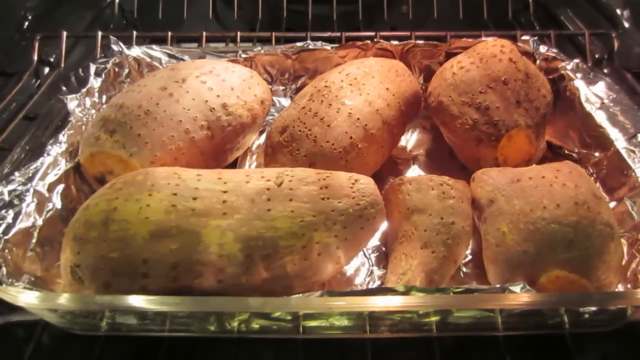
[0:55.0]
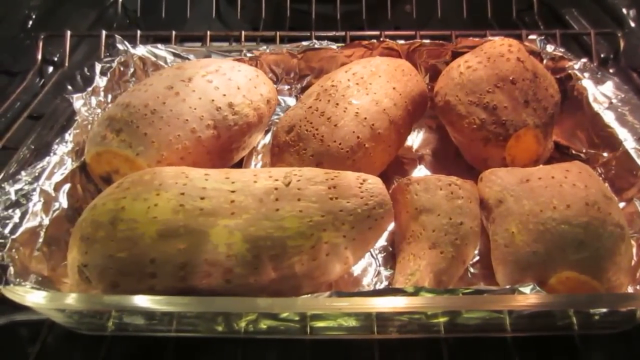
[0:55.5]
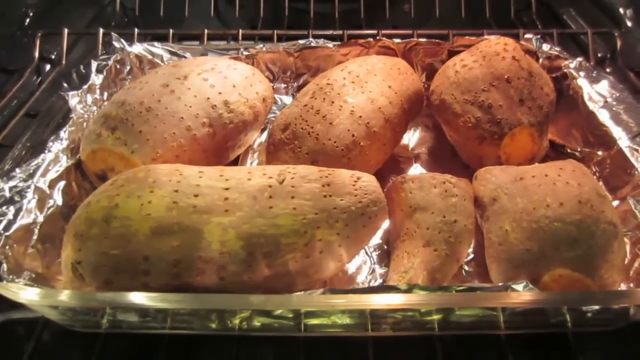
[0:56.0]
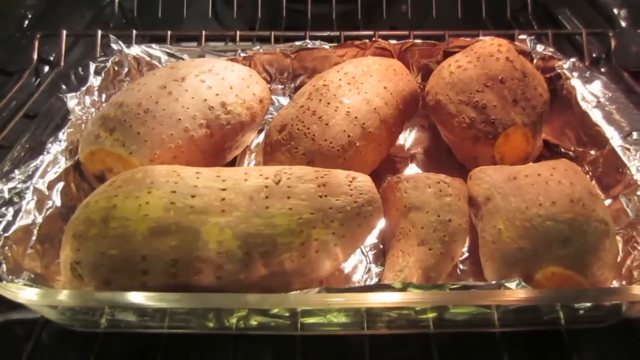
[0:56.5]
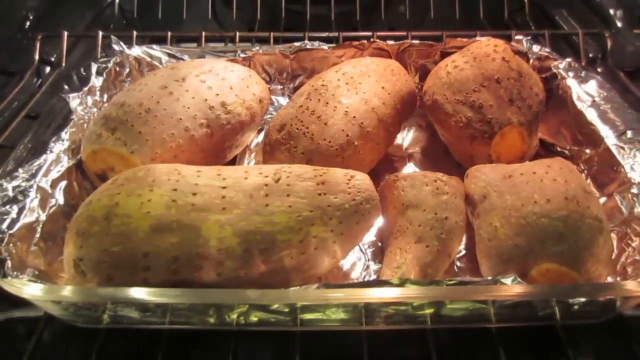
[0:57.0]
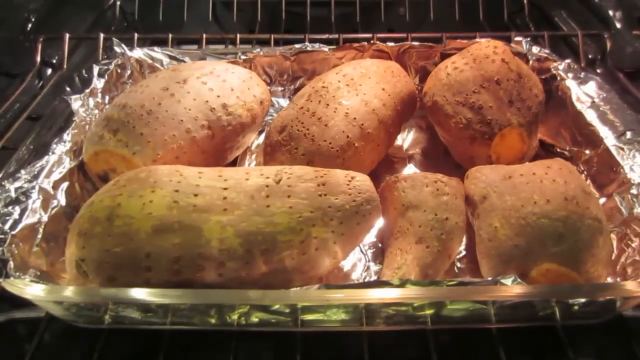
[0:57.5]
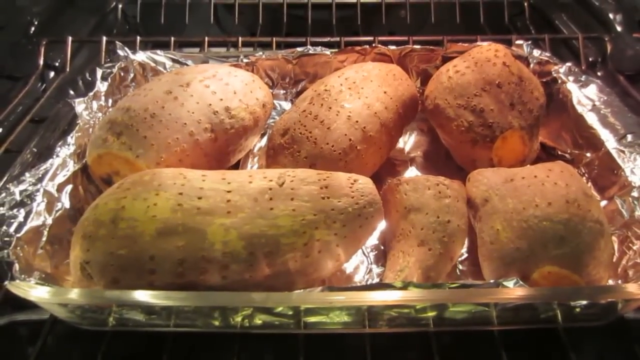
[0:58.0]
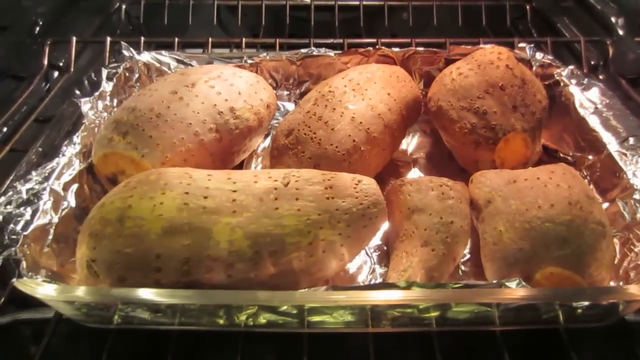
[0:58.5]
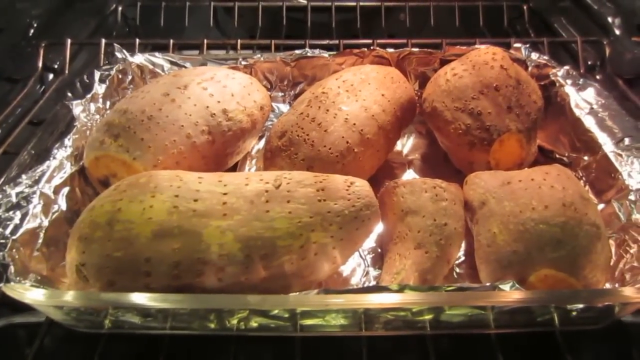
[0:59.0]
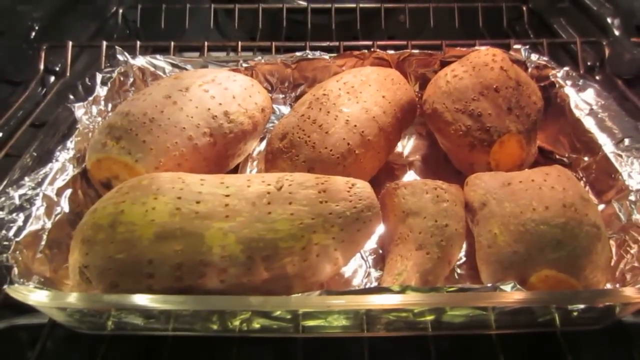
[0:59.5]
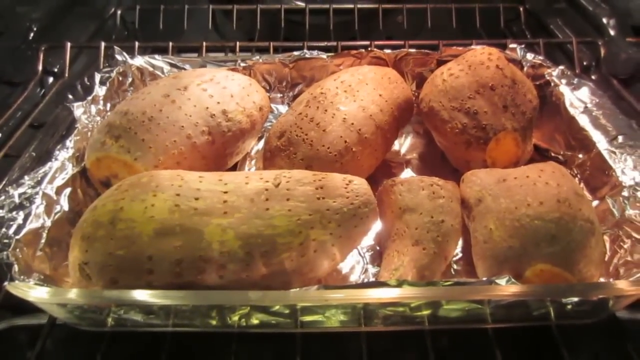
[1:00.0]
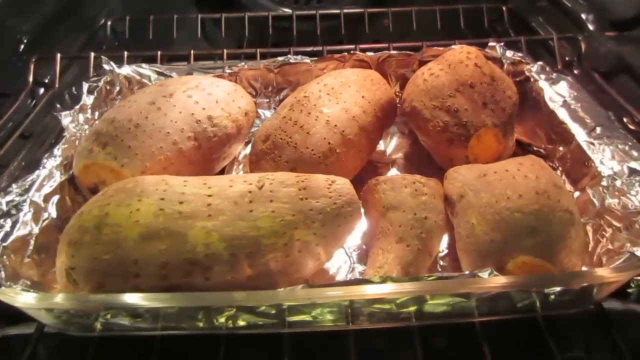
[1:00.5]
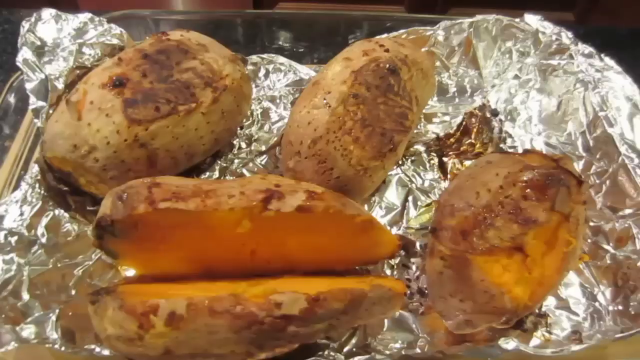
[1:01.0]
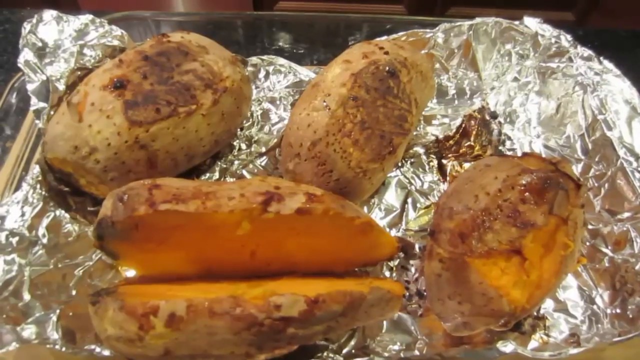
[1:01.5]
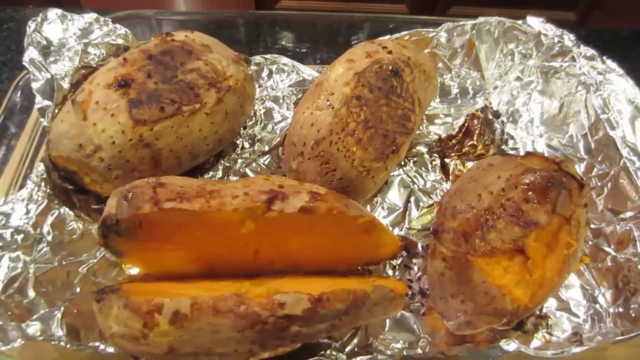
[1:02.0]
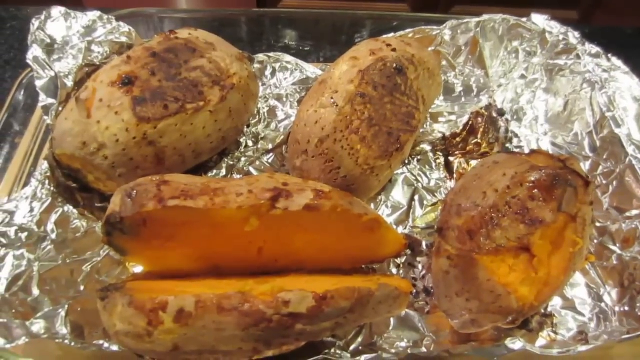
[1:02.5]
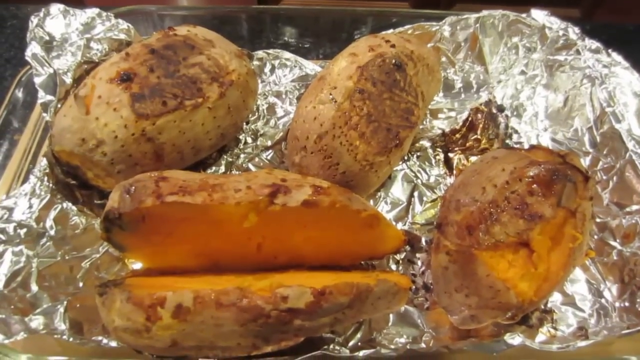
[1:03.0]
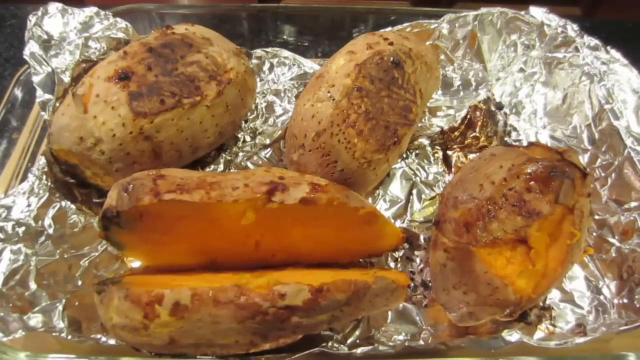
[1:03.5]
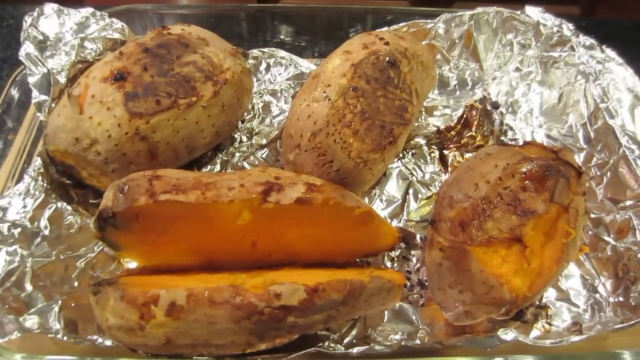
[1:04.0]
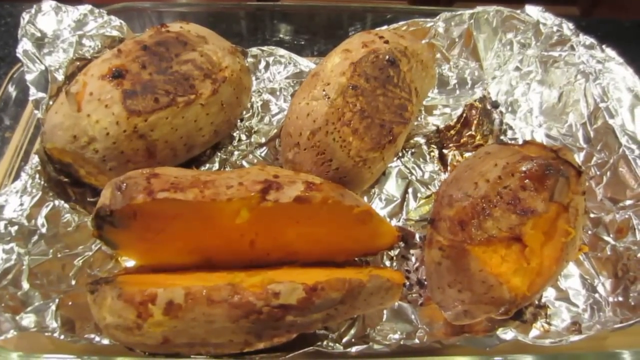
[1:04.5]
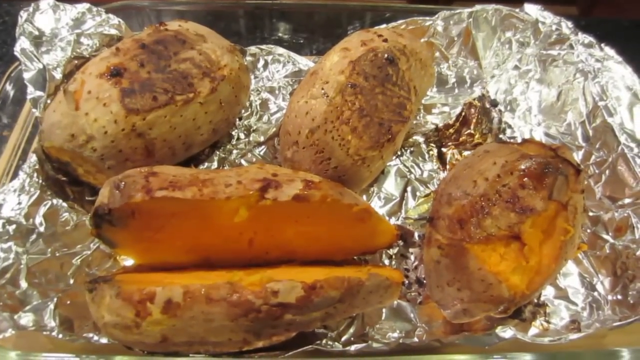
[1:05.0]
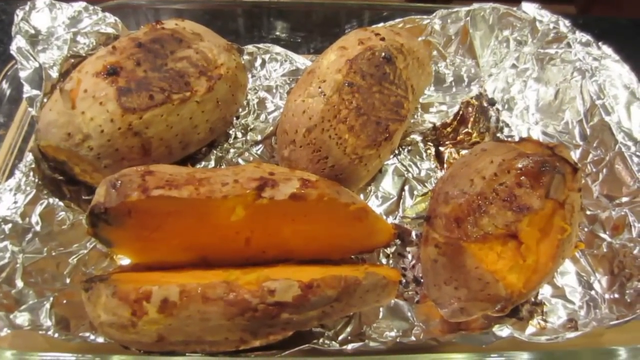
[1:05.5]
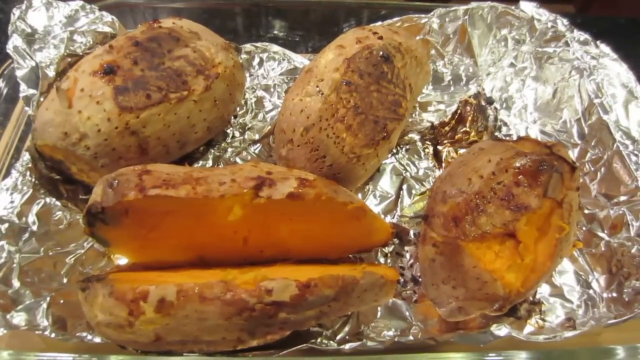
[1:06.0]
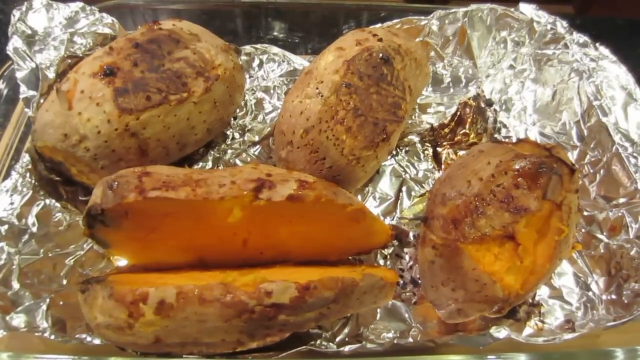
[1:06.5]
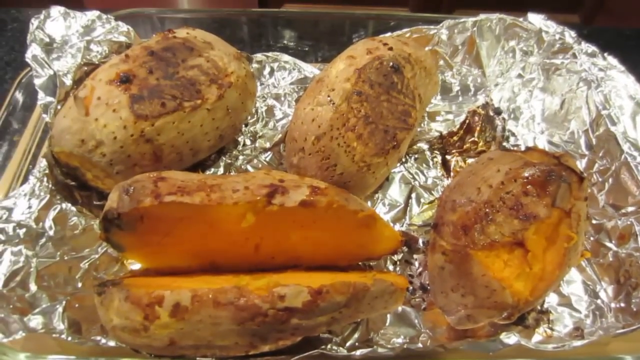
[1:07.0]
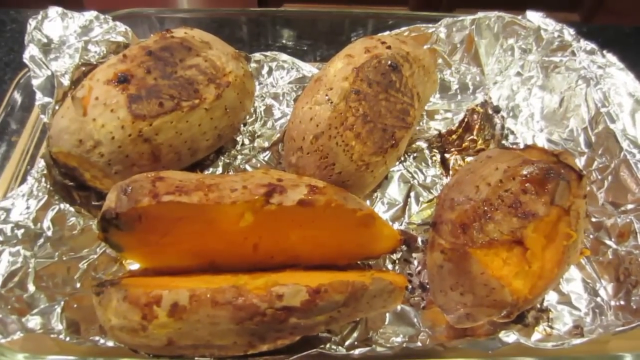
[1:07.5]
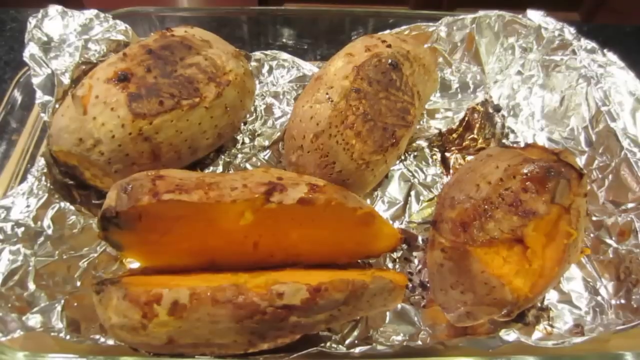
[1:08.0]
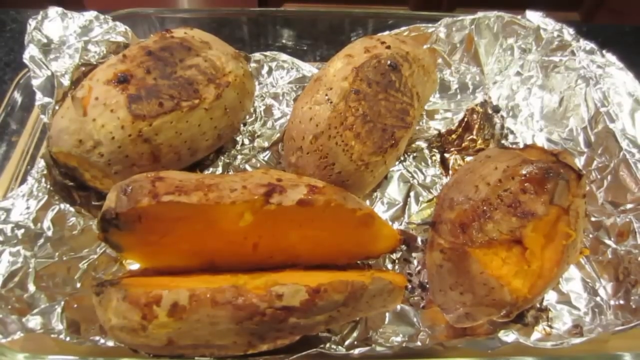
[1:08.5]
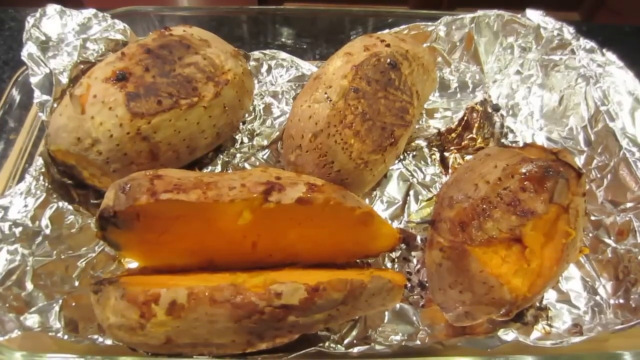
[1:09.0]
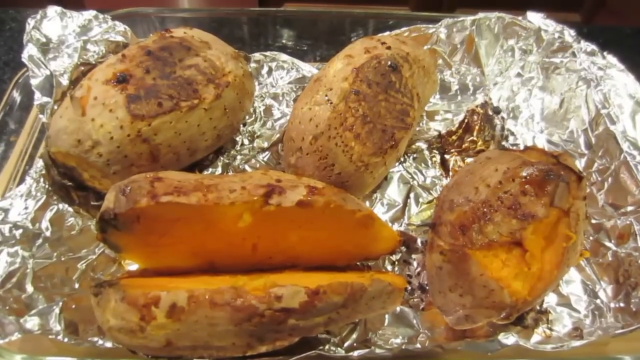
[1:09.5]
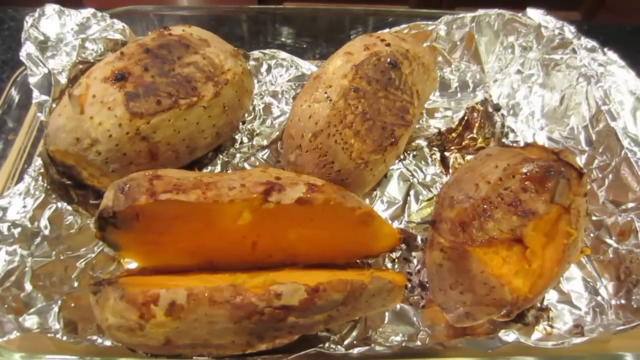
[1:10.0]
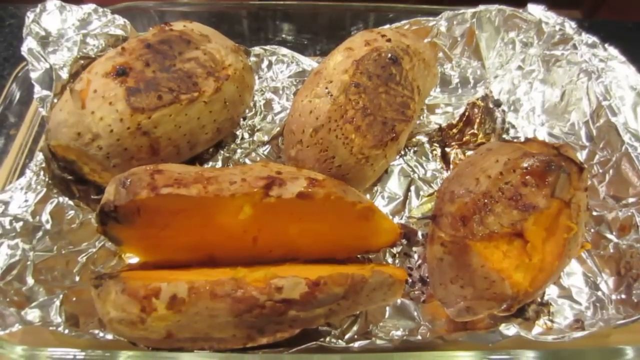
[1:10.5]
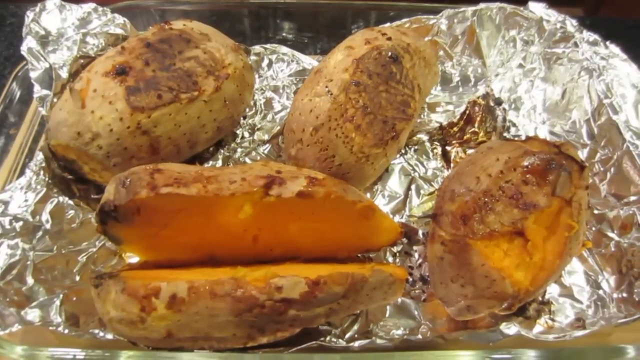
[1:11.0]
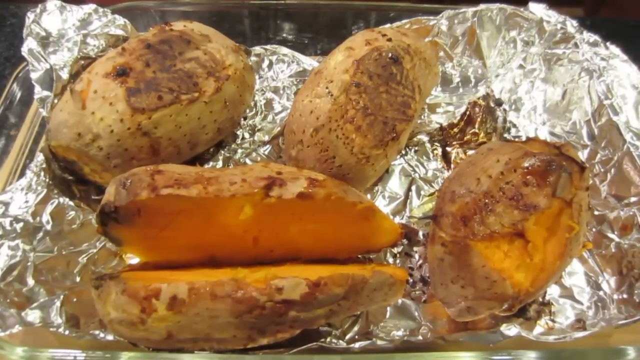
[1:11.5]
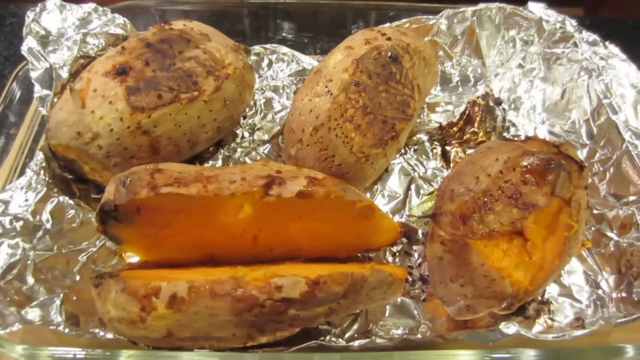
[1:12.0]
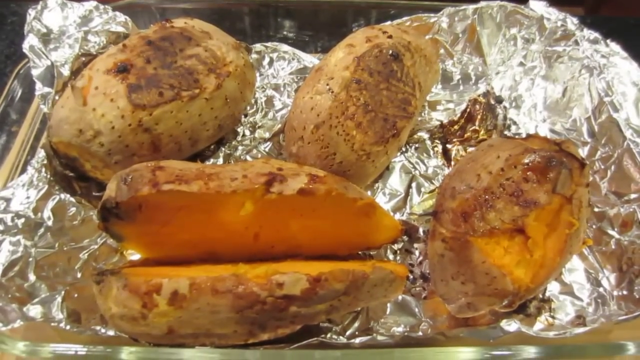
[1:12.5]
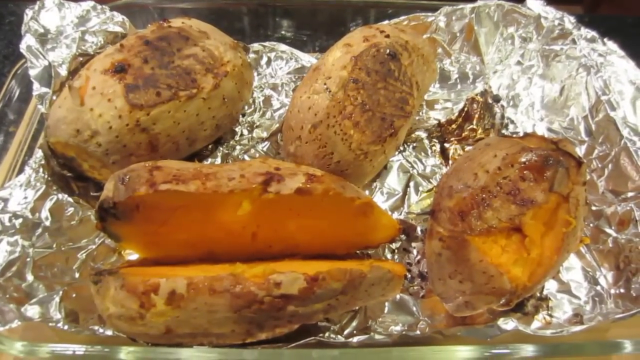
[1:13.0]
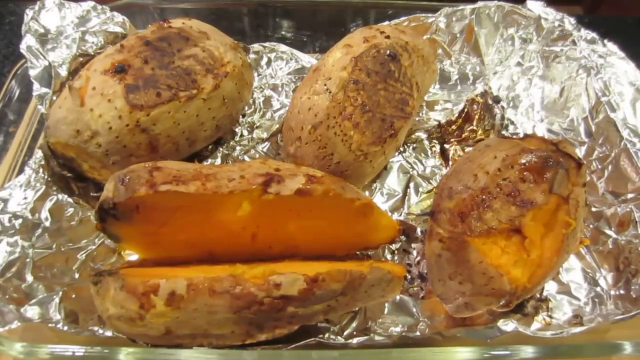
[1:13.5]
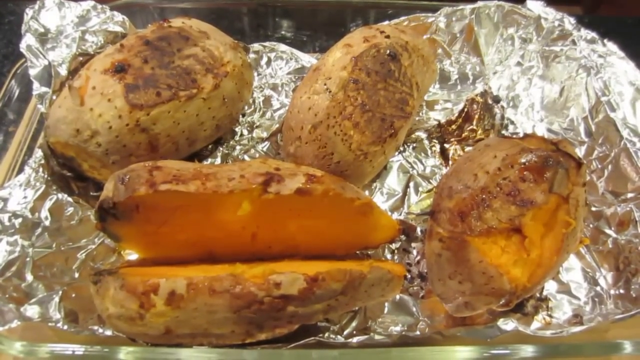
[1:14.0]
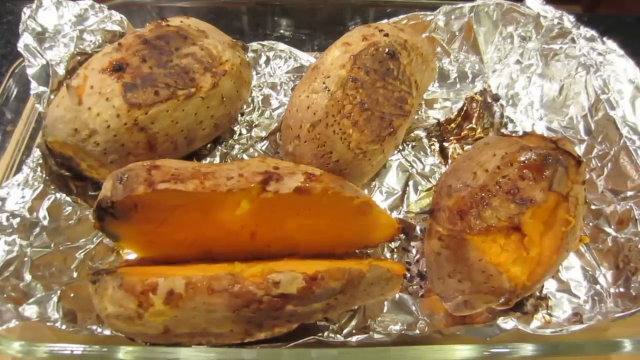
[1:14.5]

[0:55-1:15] Six sweet potatoes with tiny holes on top, presumably made by a fork, sit on aluminum foil in a deep glass oven baking dish, seen from the side. The camera is a little shaky, and then the view quickly changes to a more top-down view of sweet potatoes on a crumpled piece of aluminum foil in the same dish. There are now only four sweet potatoes. Three show burnt skins, while the one on the lower left in the foreground lies horizontally and has been cut open, revealing a dark orange color that shows the sweet potatoes have been cooked. Some kind of grease or brownish black liquid is on the crumpled foil beside some of the sweet potatoes. The camera is a little steadier in the top-down view.